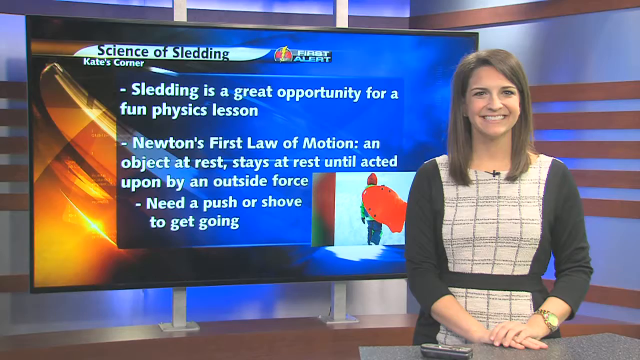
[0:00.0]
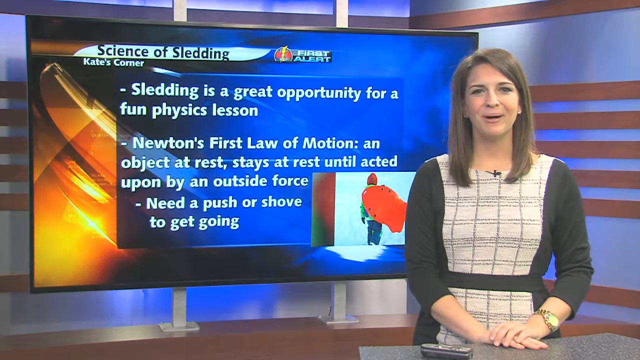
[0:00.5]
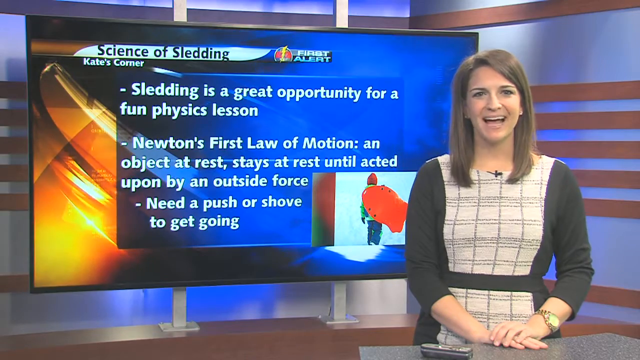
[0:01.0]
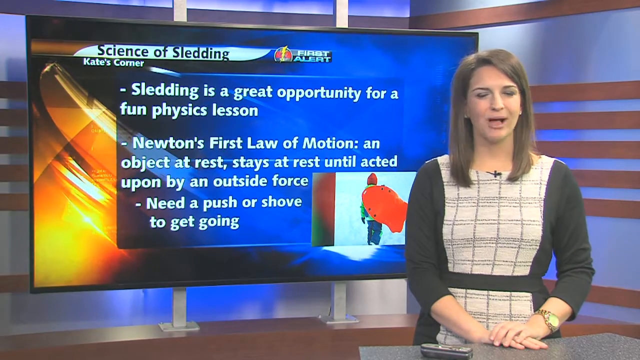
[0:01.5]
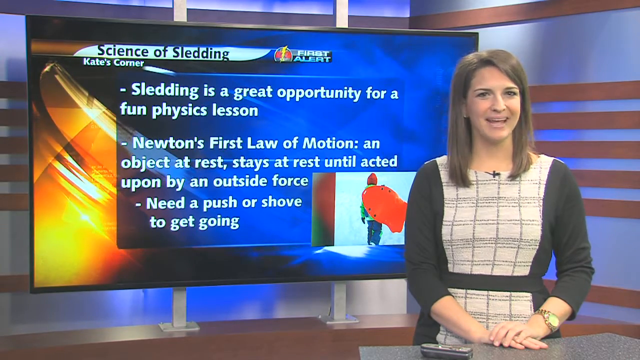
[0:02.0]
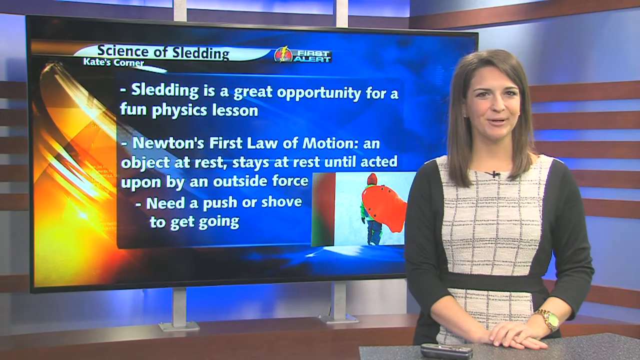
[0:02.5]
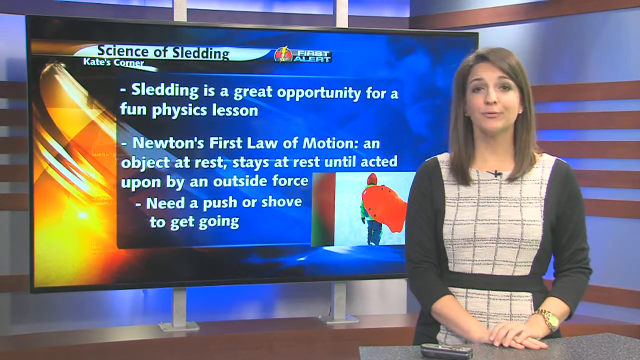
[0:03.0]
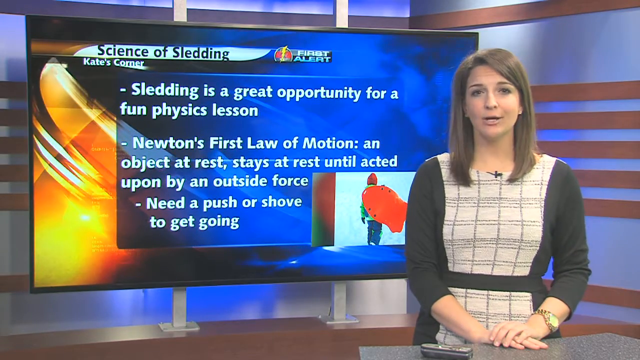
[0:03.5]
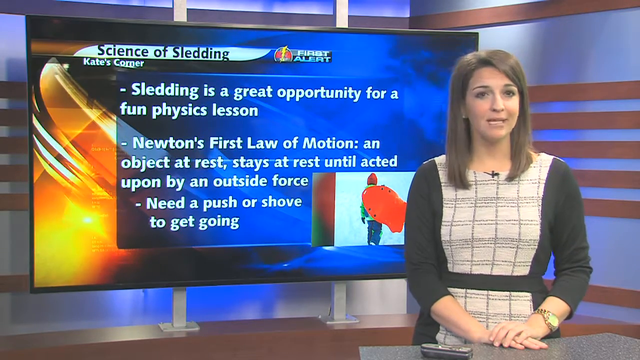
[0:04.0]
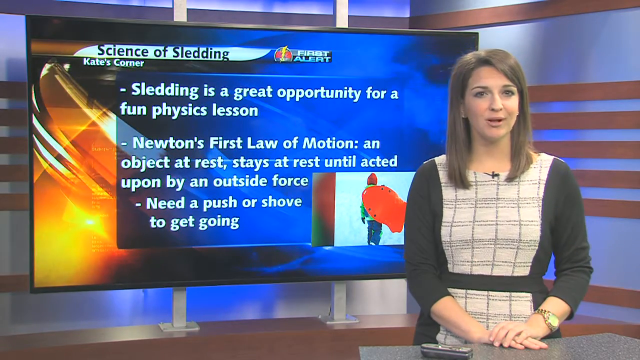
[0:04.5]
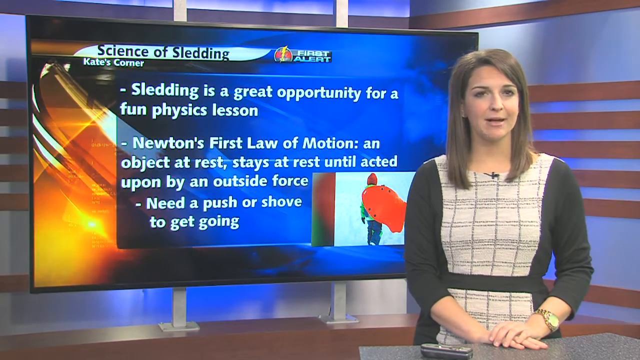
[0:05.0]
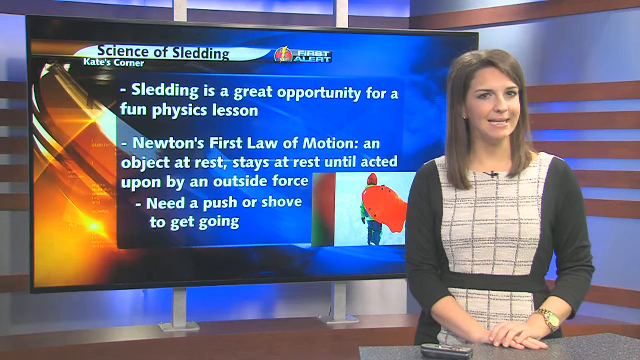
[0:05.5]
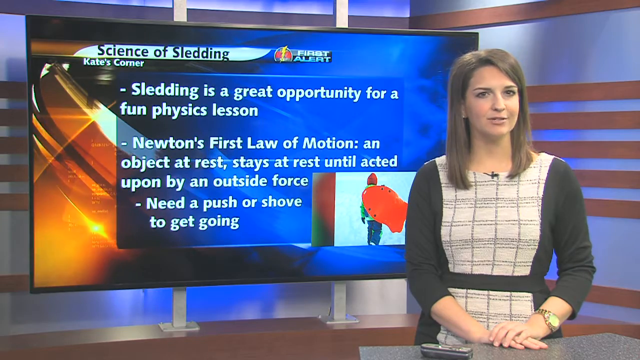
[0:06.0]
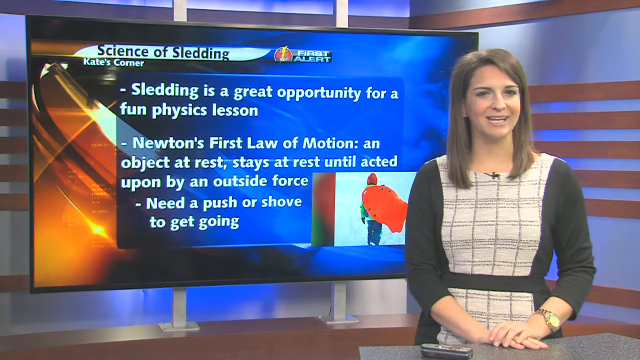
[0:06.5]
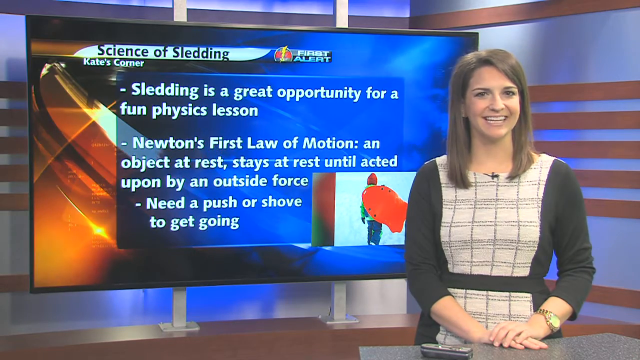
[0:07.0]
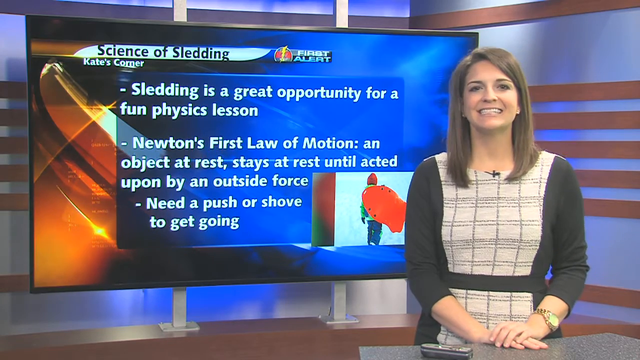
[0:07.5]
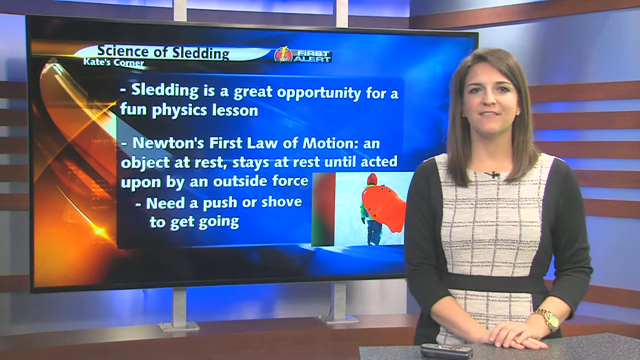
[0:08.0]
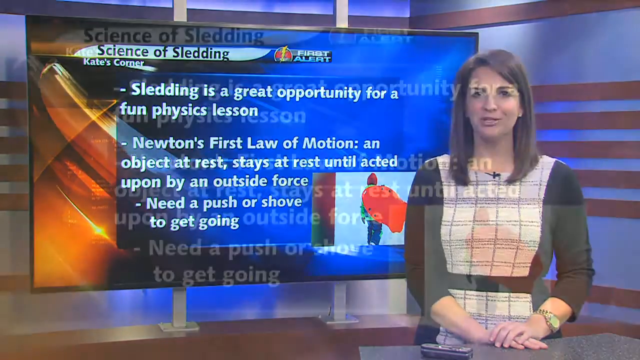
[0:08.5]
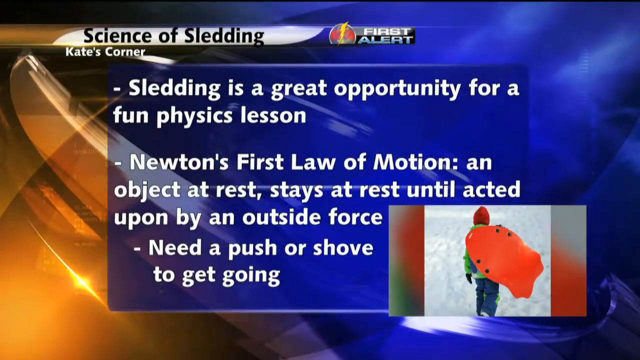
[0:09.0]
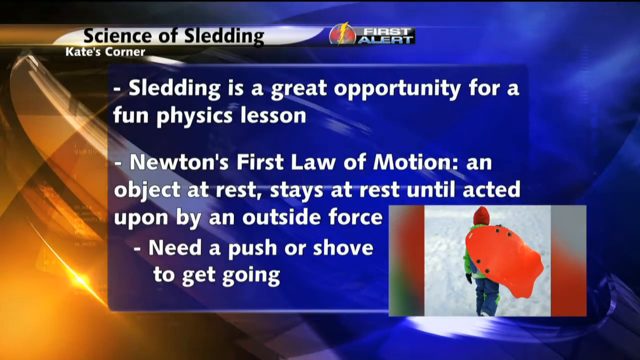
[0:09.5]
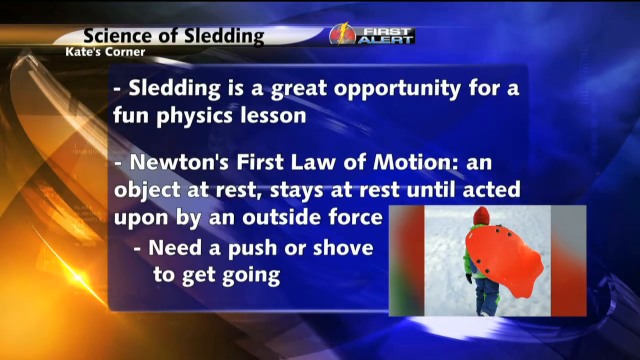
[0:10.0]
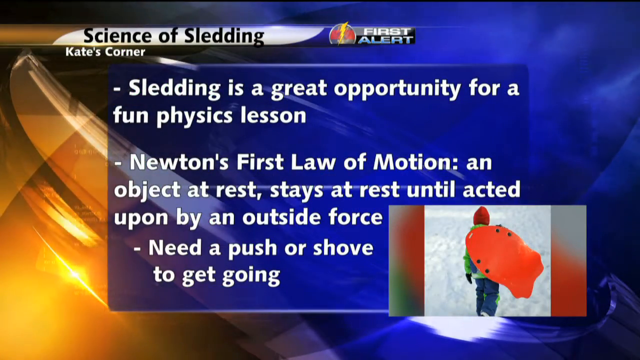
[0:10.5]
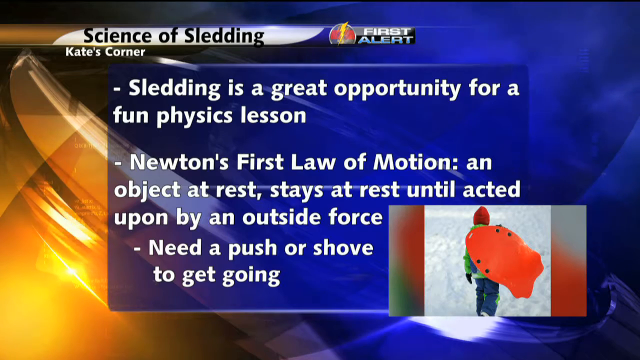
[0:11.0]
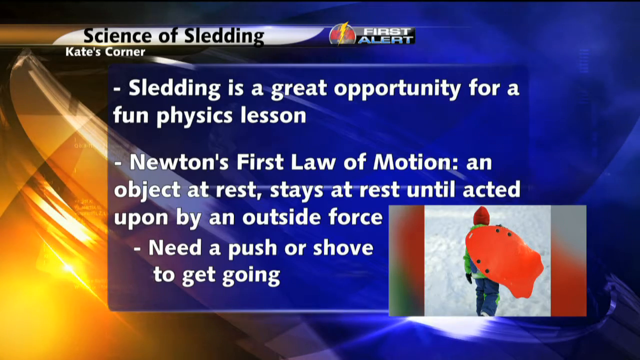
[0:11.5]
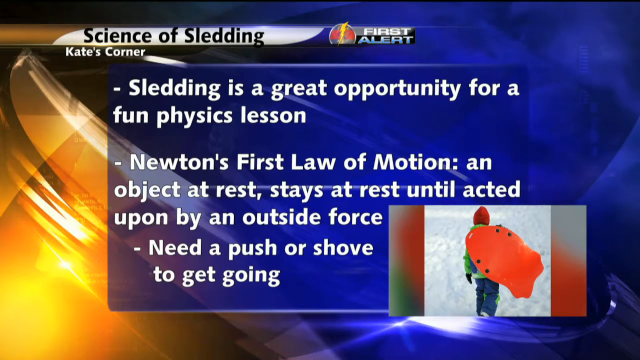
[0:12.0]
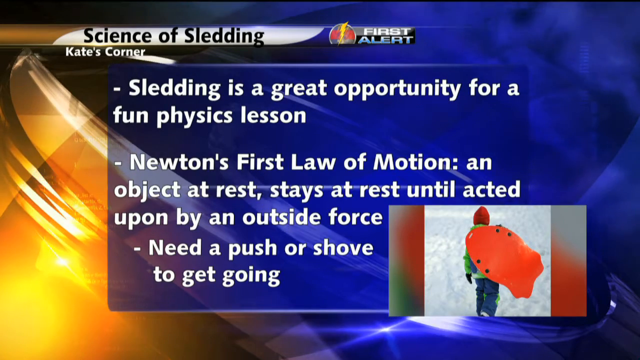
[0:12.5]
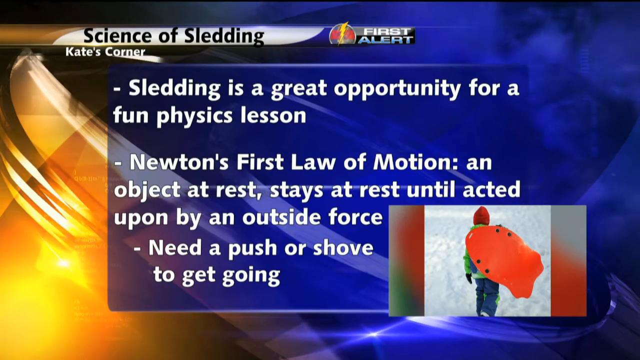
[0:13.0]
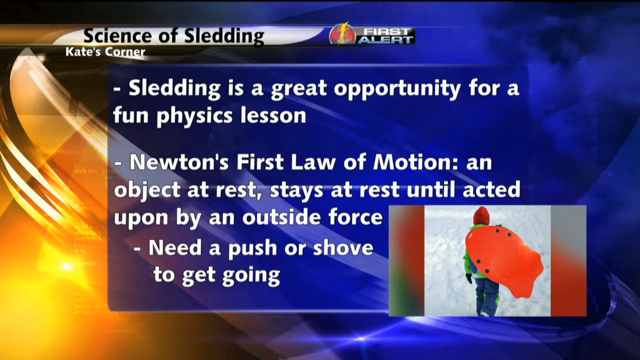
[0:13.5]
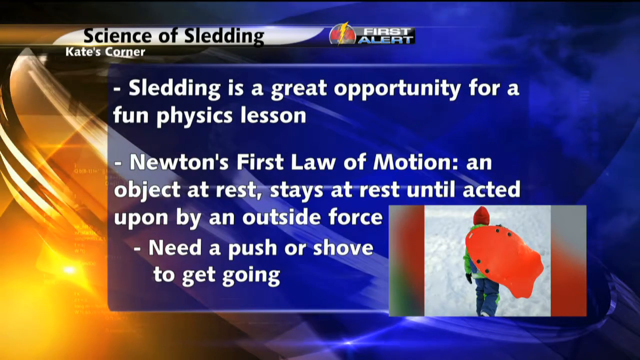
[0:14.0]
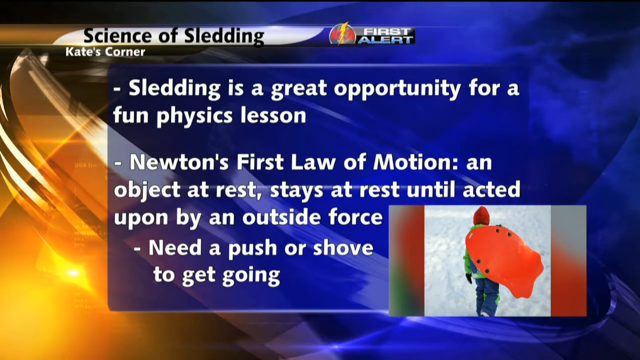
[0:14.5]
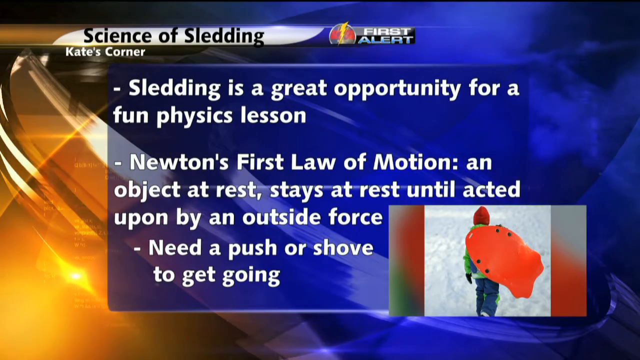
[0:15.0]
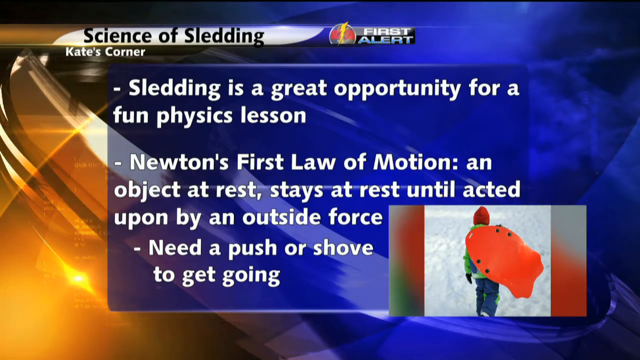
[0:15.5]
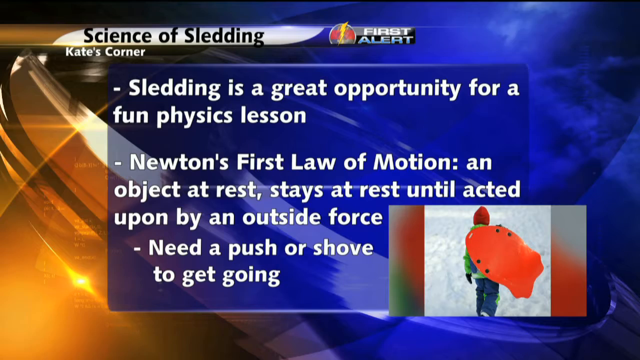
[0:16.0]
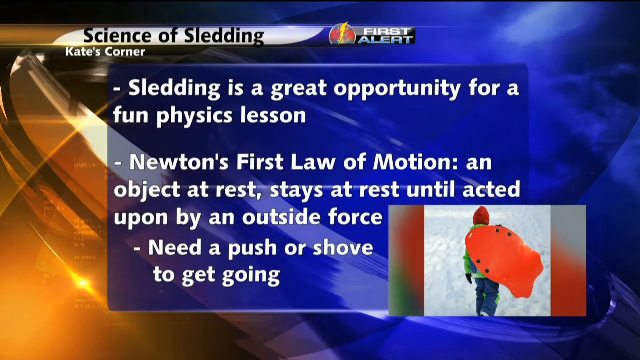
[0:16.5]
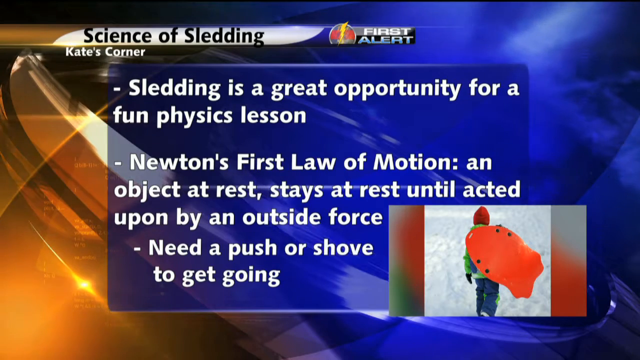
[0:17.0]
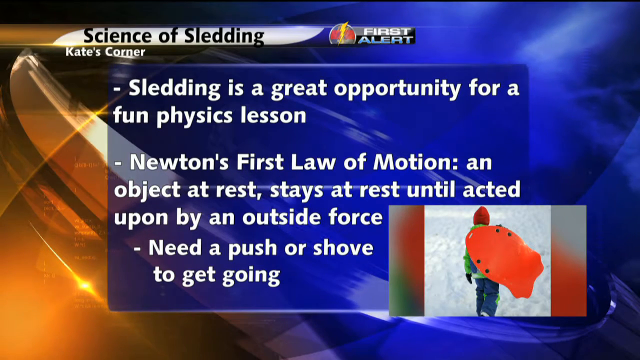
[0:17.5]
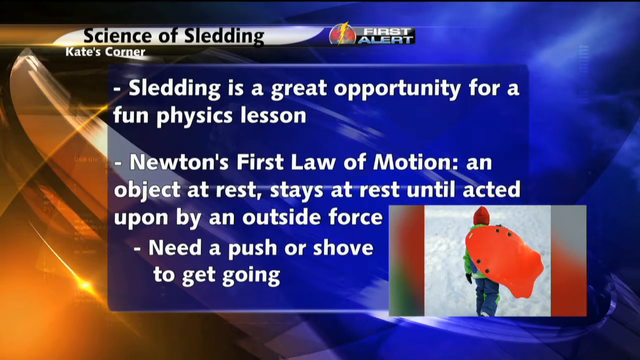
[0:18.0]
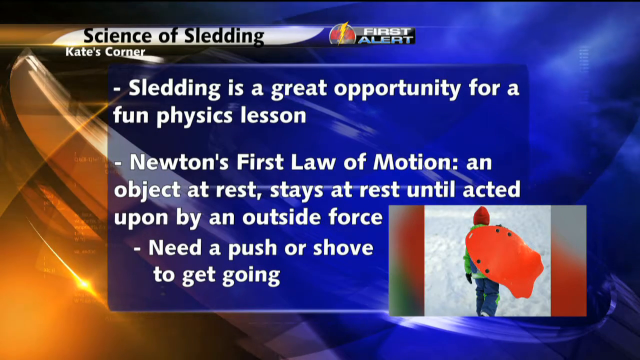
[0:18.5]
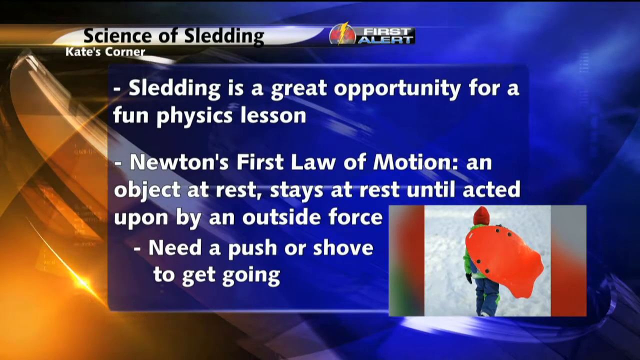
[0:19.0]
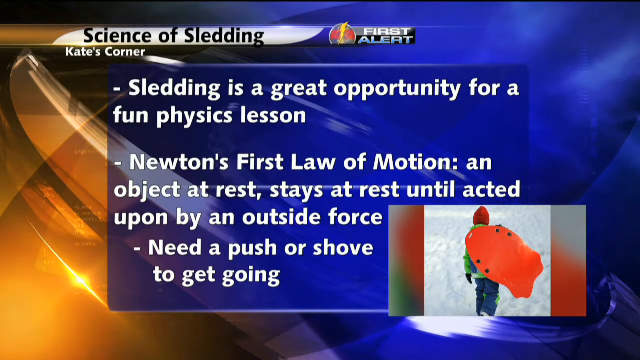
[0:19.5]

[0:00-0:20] A woman faces the camera in a room that looks like a newsroom, smiling broadly as she talks, with a video screen behind her. She seems to be in a very good mood. The screen behind her shows the story, the science of sledding, and names the news segment "Katie's Corner," part of the first alert segment. Text on the screen reads: "Sledding is a great opportunity for a fun physics lesson. Newton's first law of motion. An object at rest stays at rest until acted upon by an outside force. Need a push or shove to get going." In the lower right corner of the screen, a young person, apparently carrying an orange sled on their back, walks up a snowy hill. They wear a snowsuit that is green on top and dark blue on the bottom, which looks like insulated clothing, and a red beanie cap.